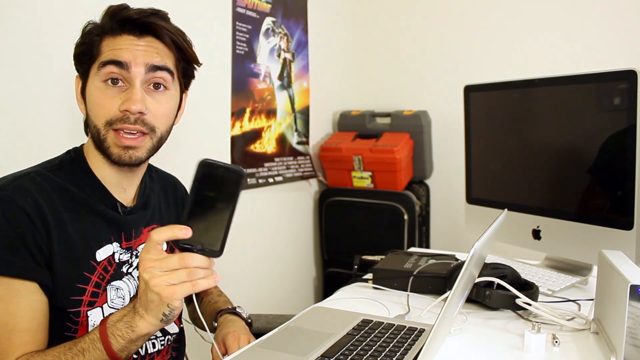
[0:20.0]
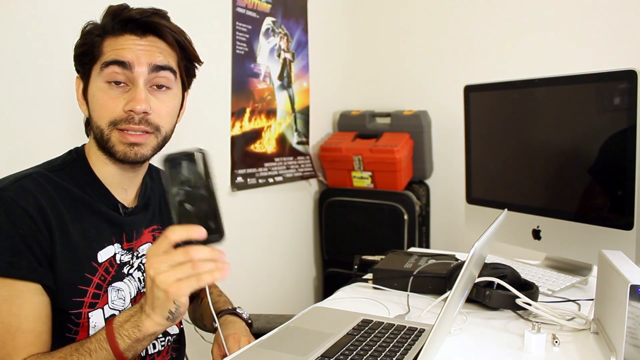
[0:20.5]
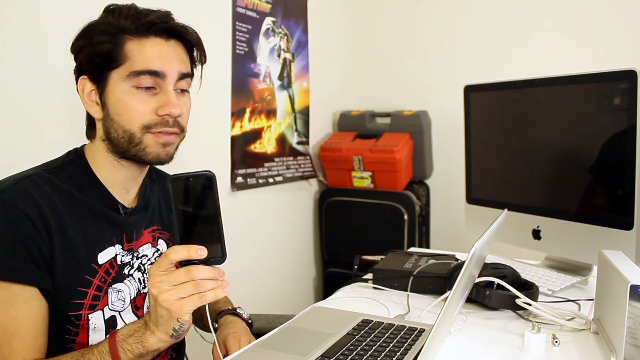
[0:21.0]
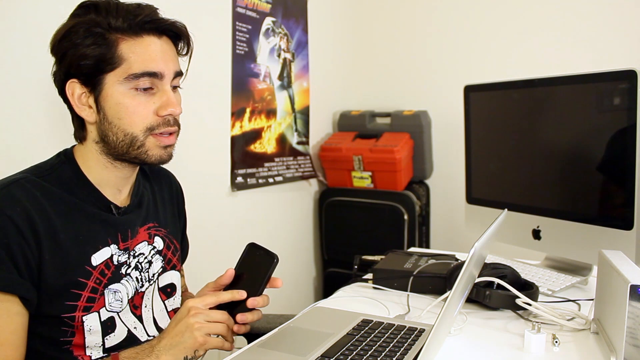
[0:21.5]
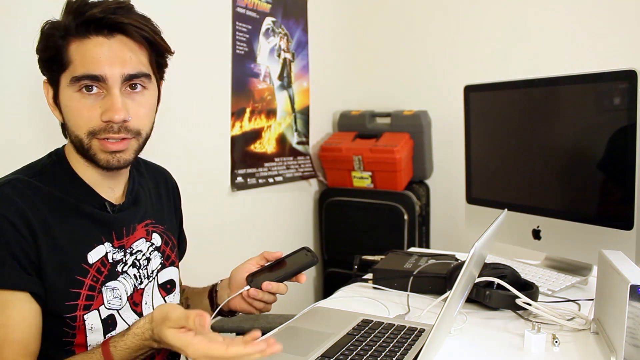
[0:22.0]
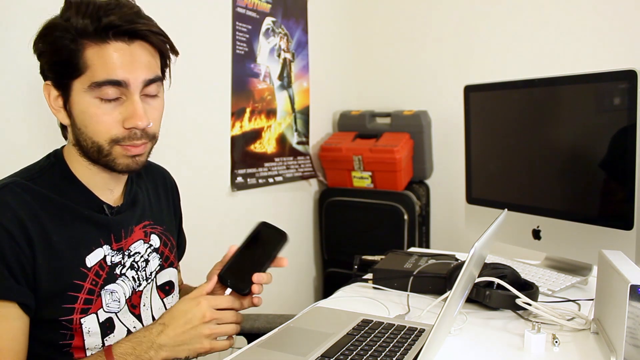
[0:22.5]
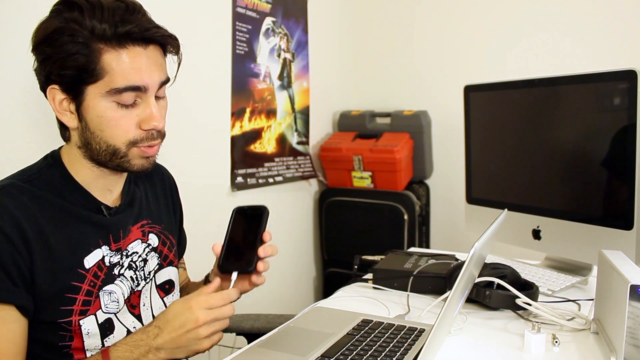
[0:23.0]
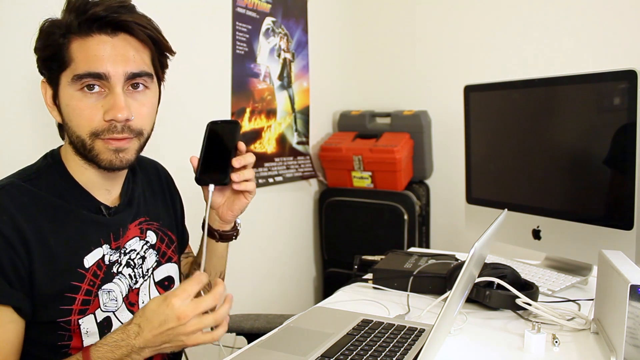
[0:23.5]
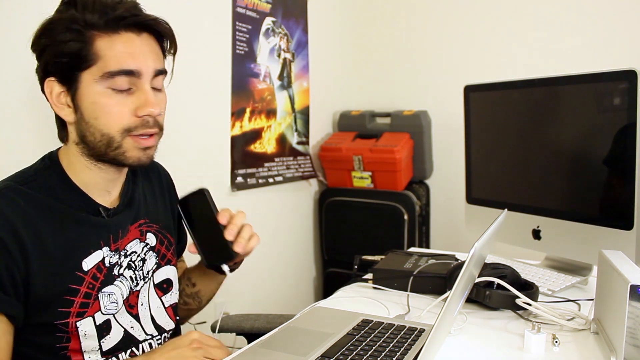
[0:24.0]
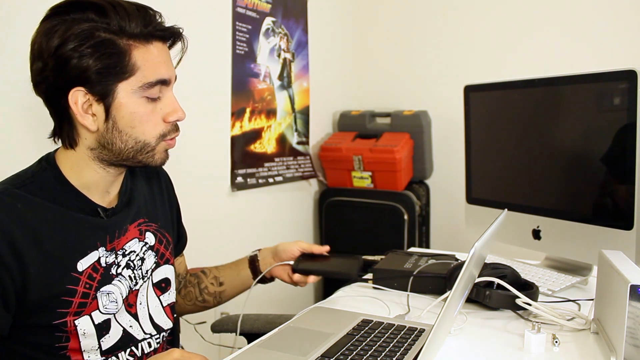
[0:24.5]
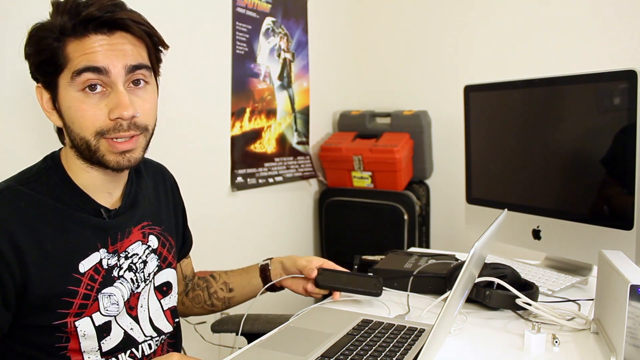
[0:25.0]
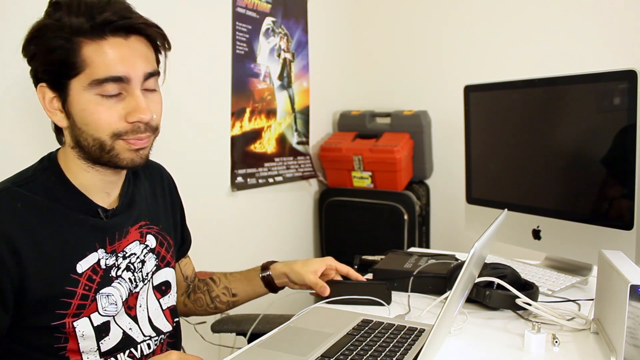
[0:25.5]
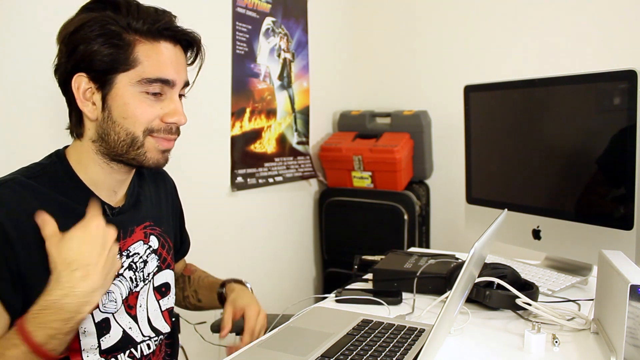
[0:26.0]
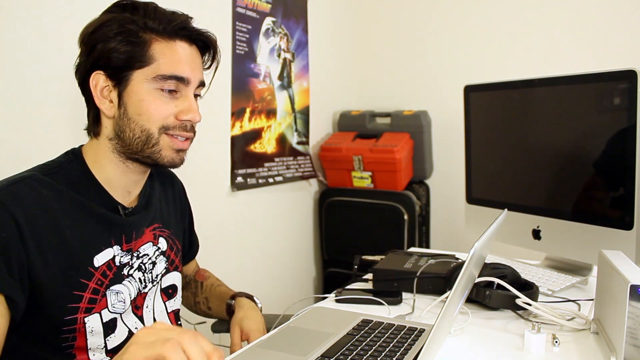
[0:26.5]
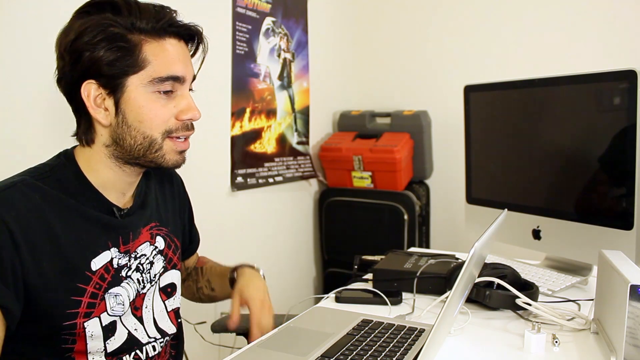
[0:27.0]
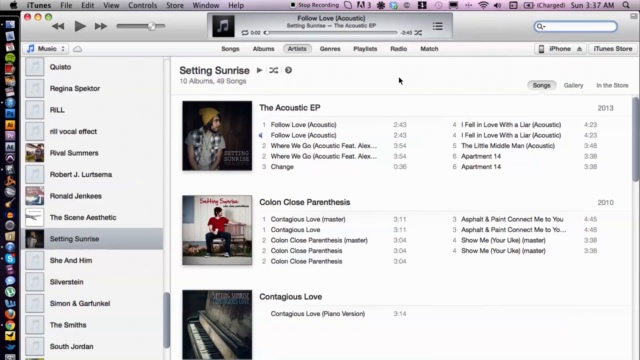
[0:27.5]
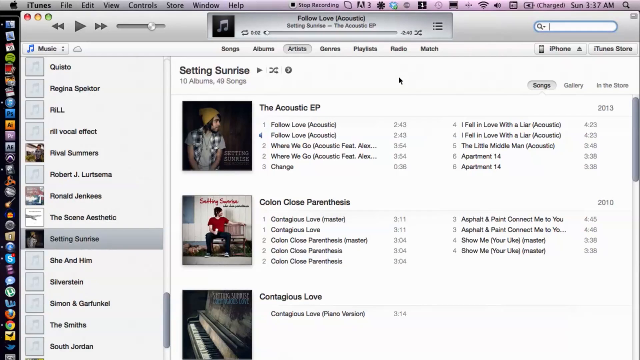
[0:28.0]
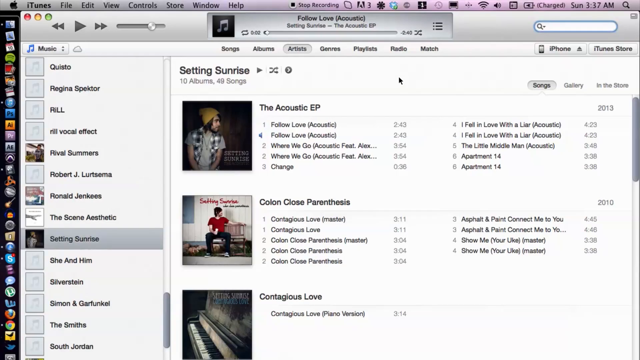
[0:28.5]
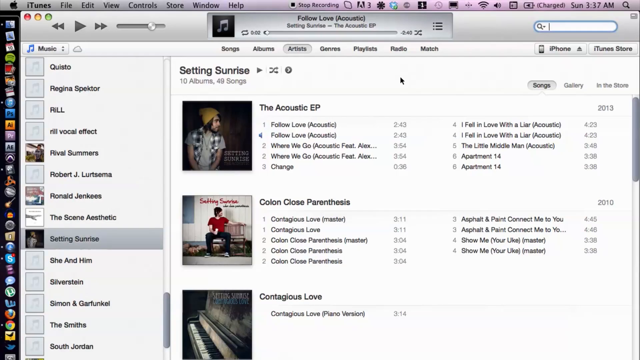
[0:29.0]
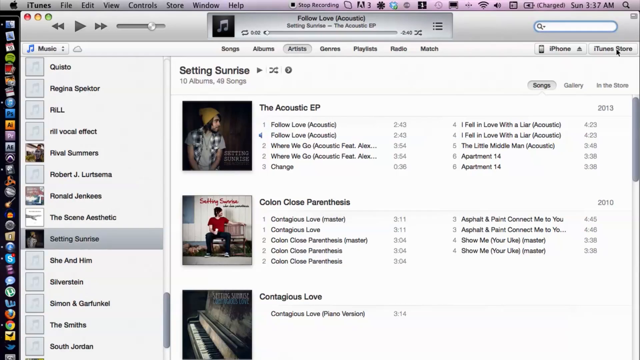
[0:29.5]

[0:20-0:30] The YouTuber gestures at the iPhone and at the laptop as the main content is about to start. A cord is connected to the iPhone, and software is opening on the laptop; iTunes is open on the laptop and ready. He holds the phone in his right hand and places it on the left side of the laptop, about to move to the computer screen.